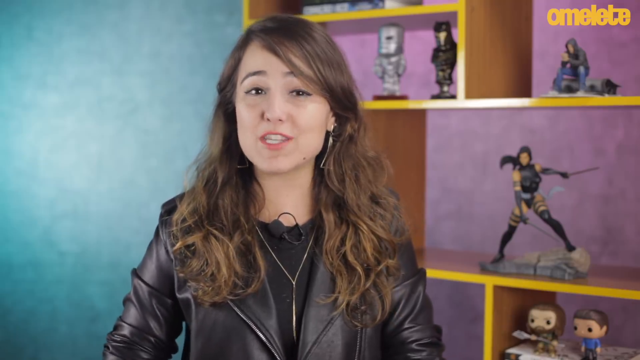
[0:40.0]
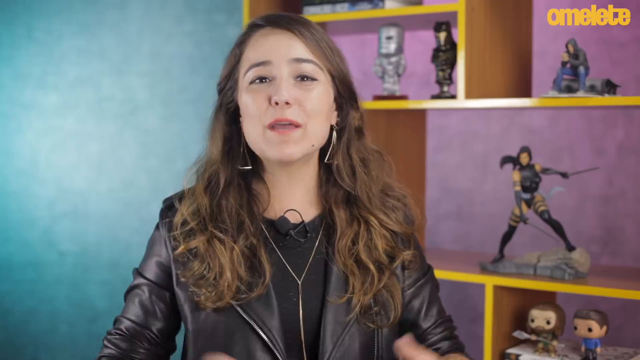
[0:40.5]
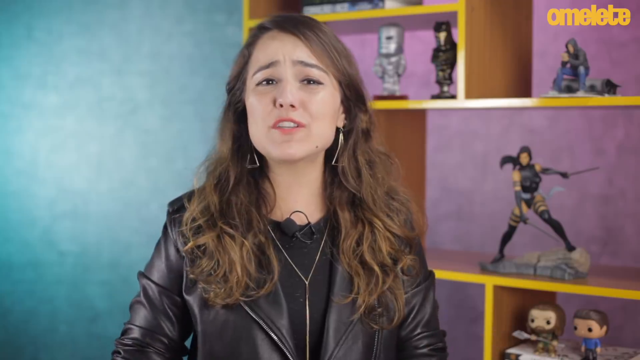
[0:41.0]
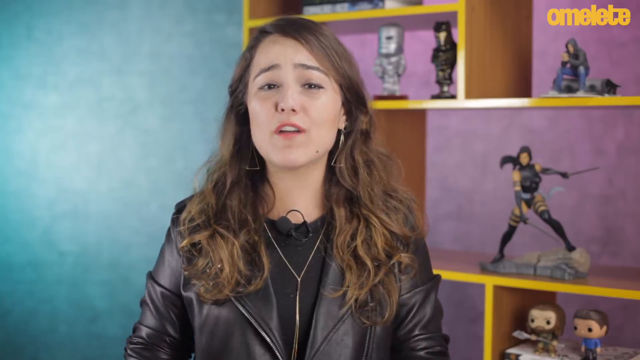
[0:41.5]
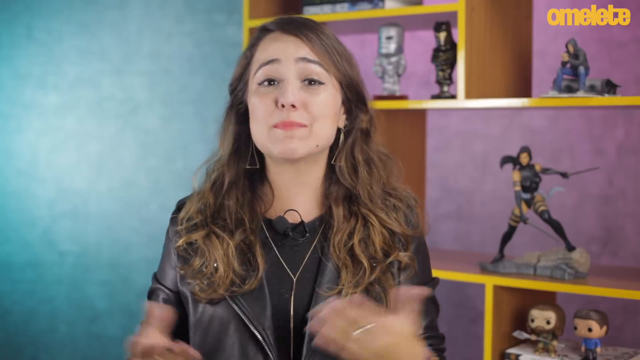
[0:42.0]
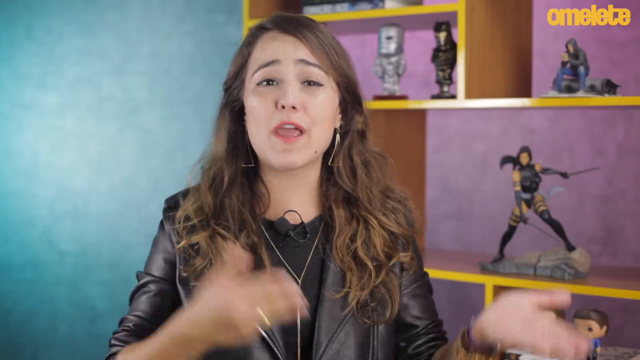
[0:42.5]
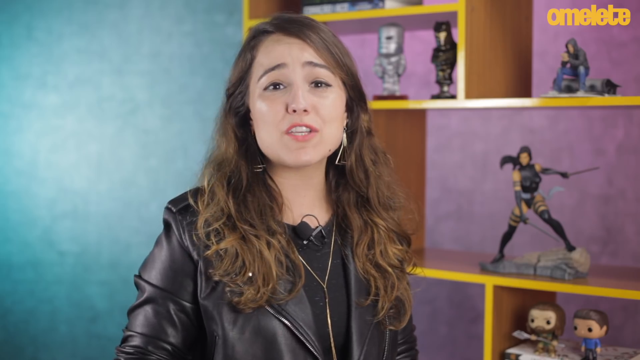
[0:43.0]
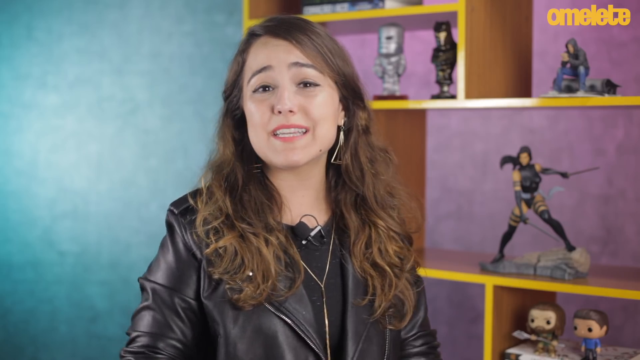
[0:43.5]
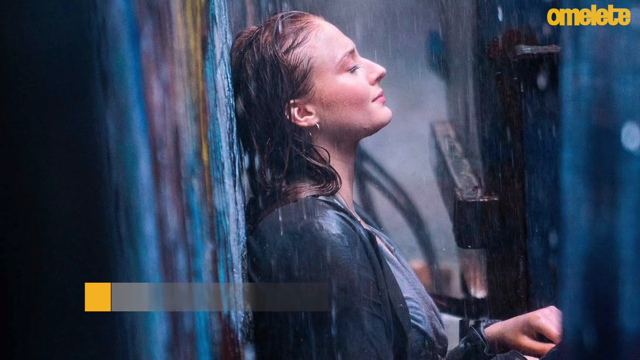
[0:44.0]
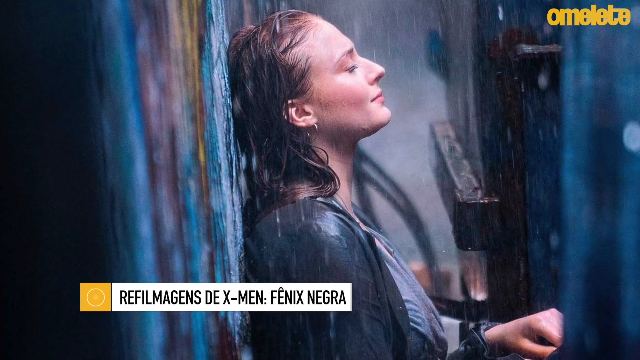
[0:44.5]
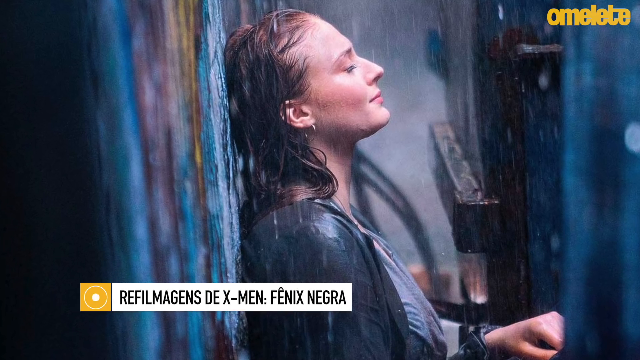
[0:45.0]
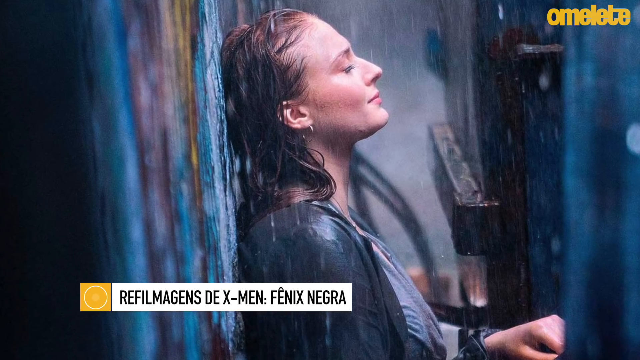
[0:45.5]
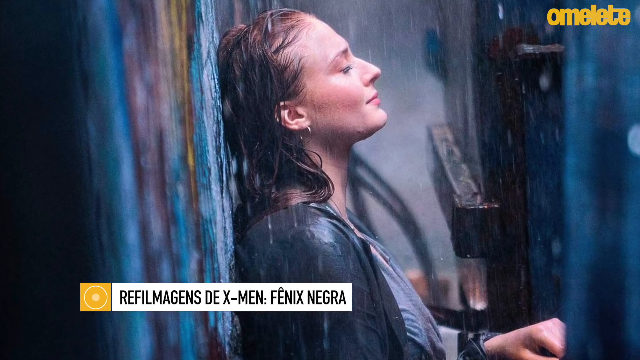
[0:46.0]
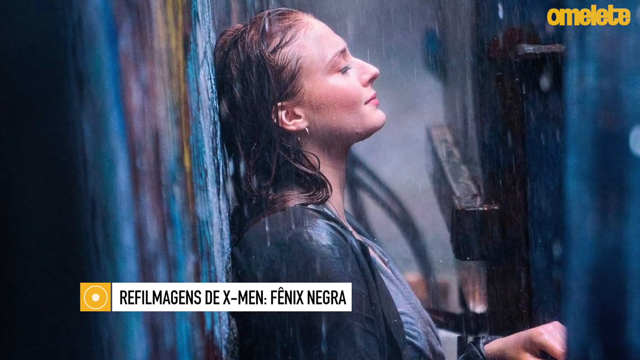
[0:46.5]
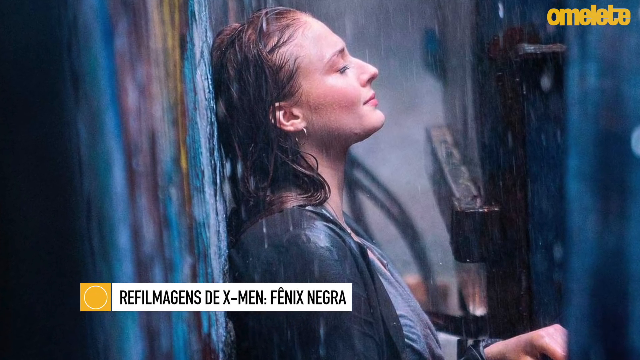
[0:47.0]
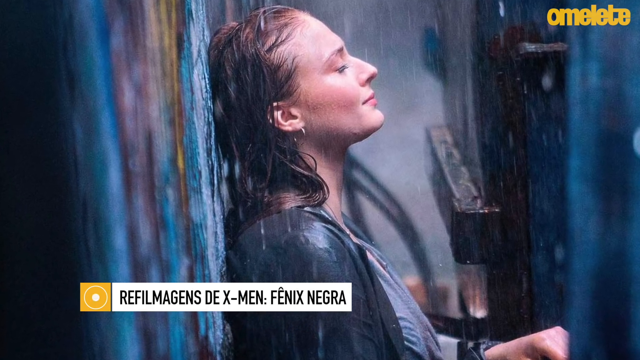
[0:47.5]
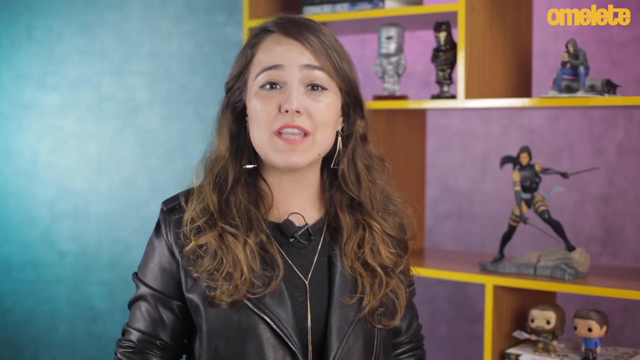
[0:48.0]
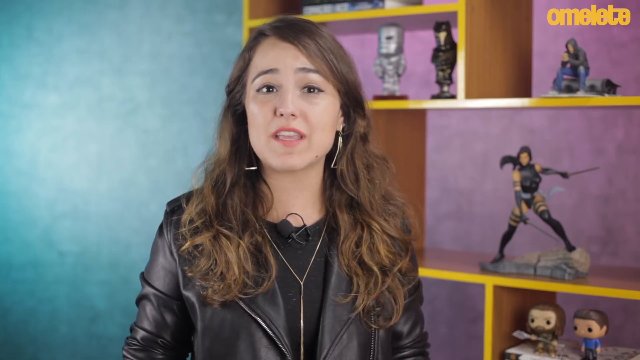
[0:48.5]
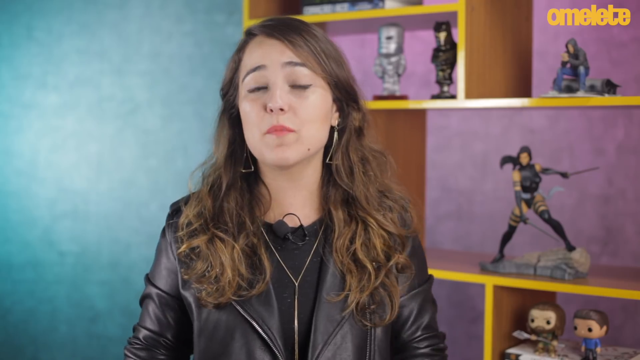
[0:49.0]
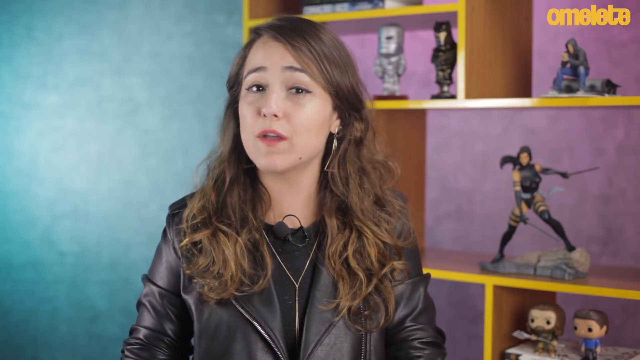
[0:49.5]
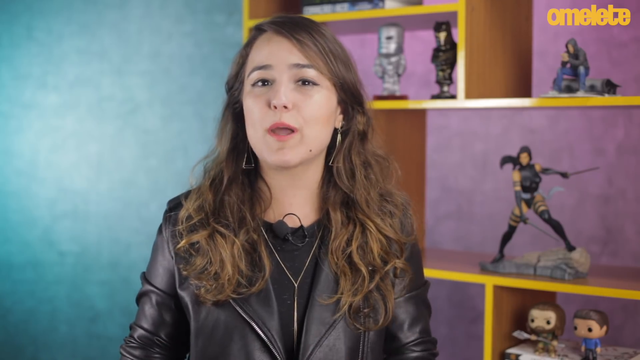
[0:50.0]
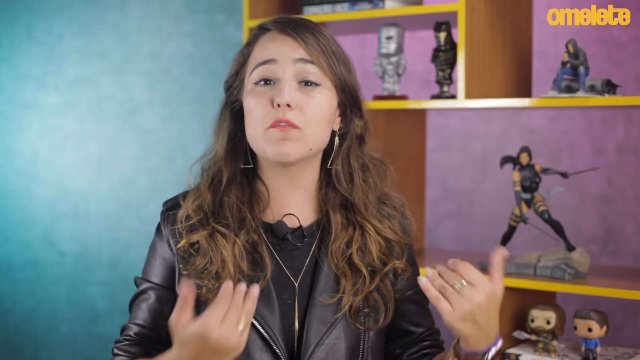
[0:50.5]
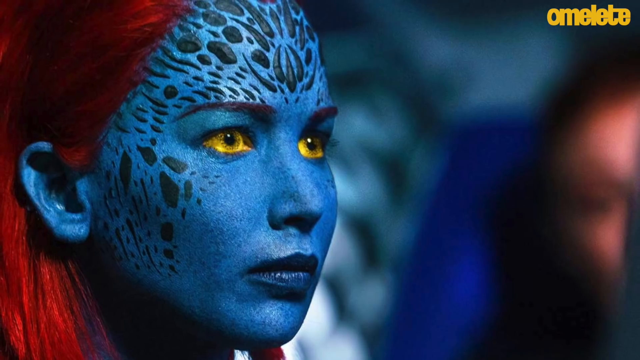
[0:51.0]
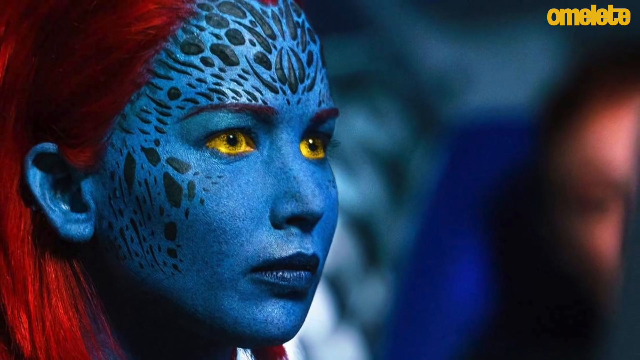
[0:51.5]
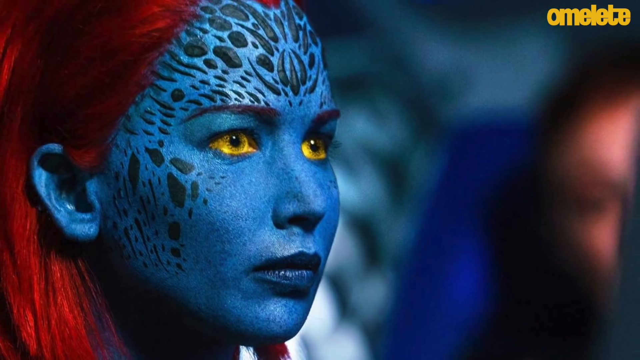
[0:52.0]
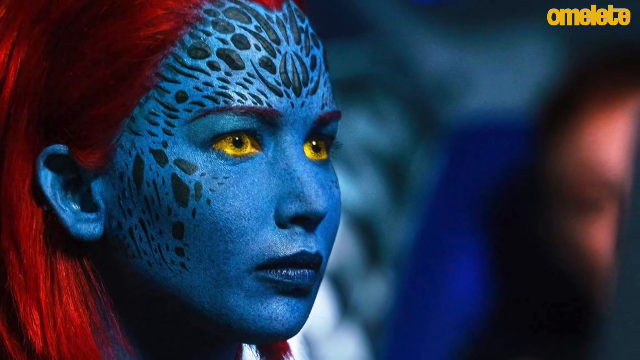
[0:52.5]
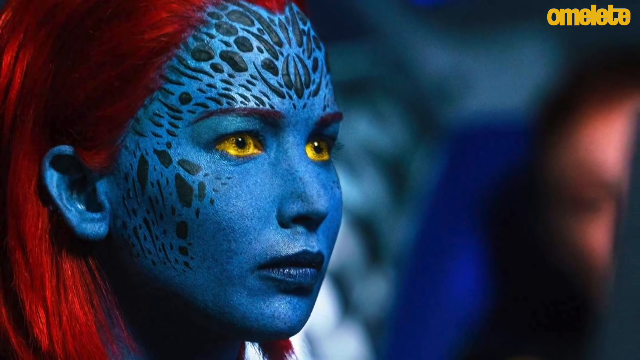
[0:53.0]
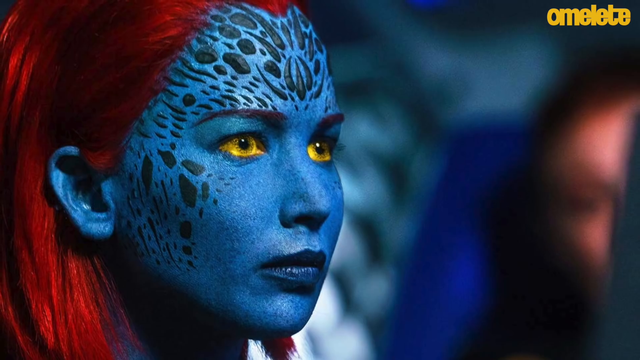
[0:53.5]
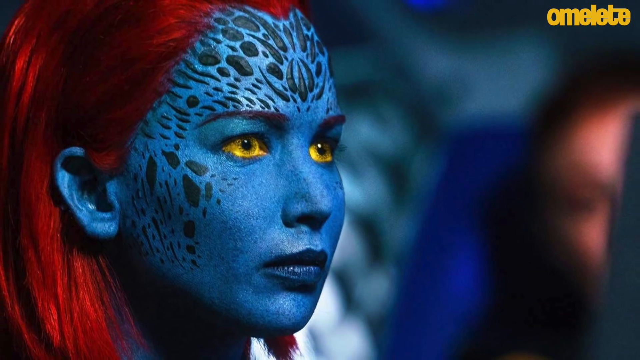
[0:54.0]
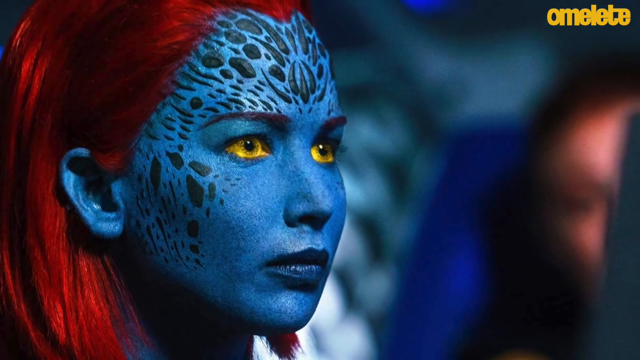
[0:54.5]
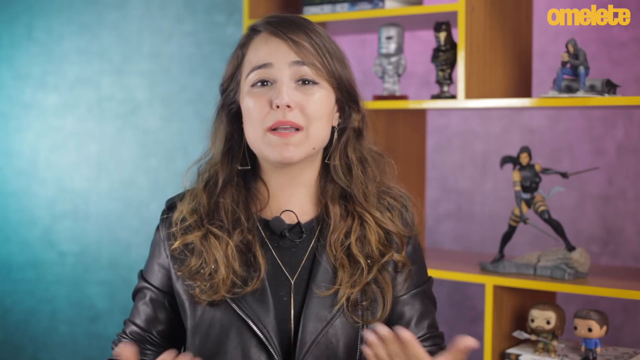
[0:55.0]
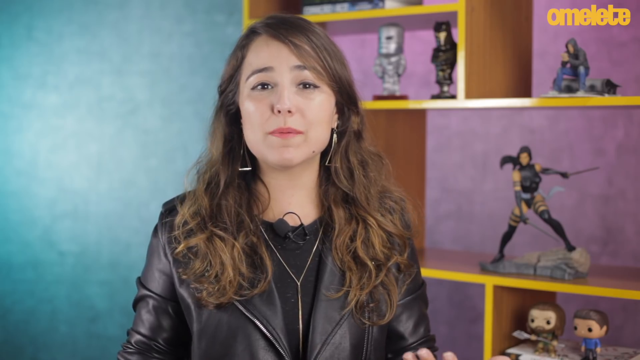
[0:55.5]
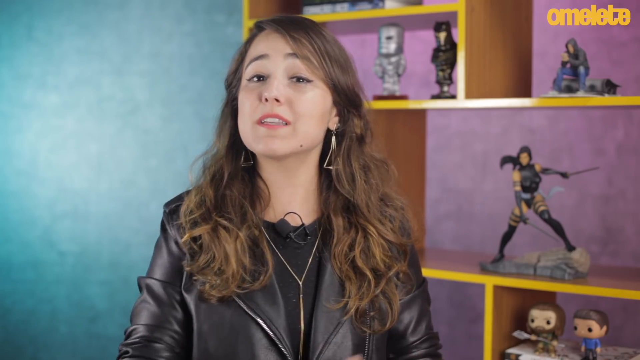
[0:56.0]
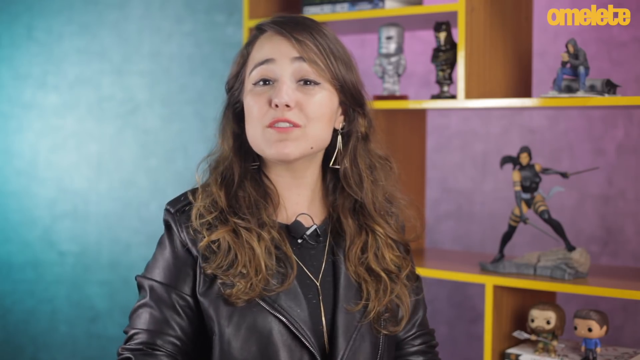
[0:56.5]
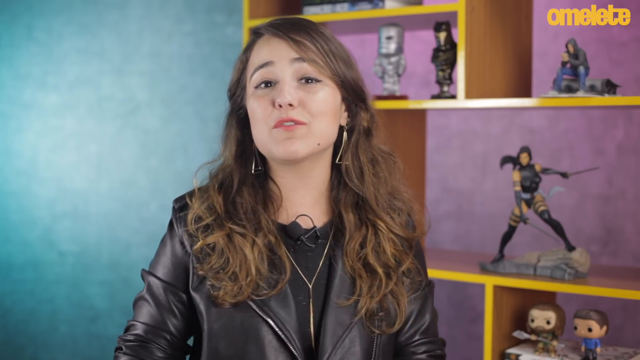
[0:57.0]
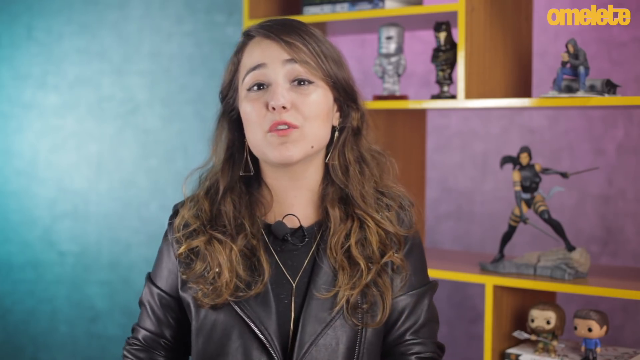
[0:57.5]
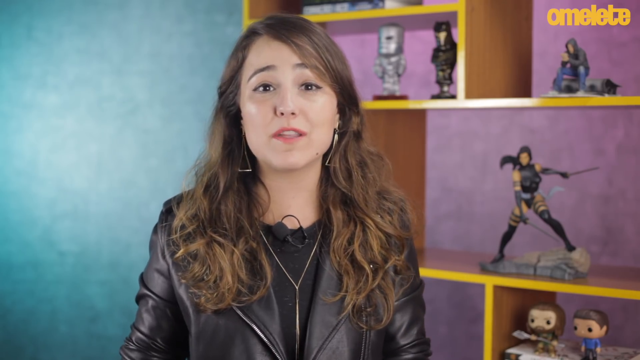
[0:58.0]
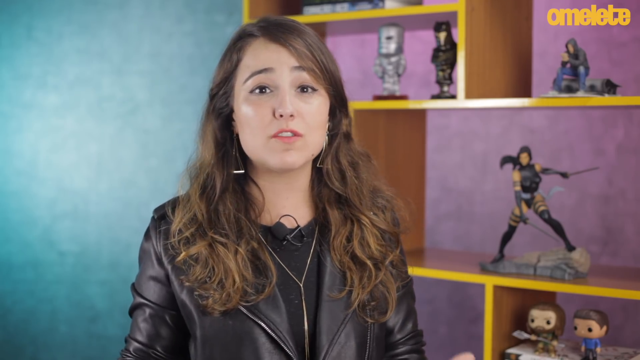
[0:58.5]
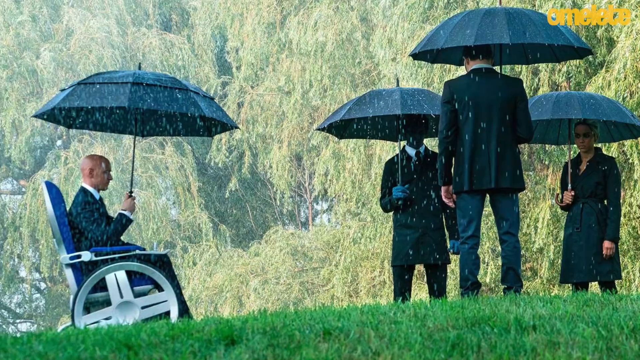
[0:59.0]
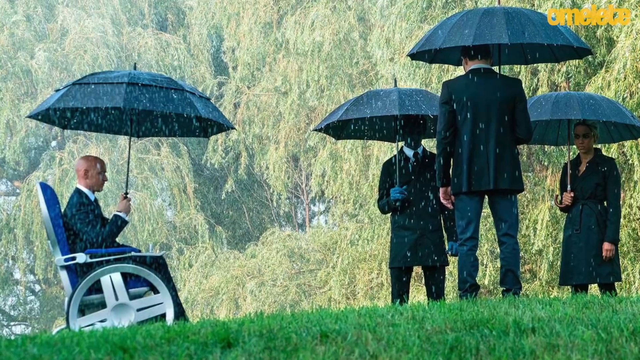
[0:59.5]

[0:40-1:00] The woman continues talking to the camera with the "omelette" sticker in the top right corner. The video switches to a white woman who seems to be standing in the rain, her hair and clothes appearing wet, with a caption below her reading "the x-men phoenix negra". It cuts back to the woman talking, then to a female character with red hair and blue skin, then back to the woman. Next, a man who seems to be Professor X sits in a wheelchair under an umbrella, with what seems to be the blue Beast from X-Men; a man facing the opposite direction also holds an umbrella, as does another woman. They all have umbrellas and it seems to be rainy, possibly at a funeral.